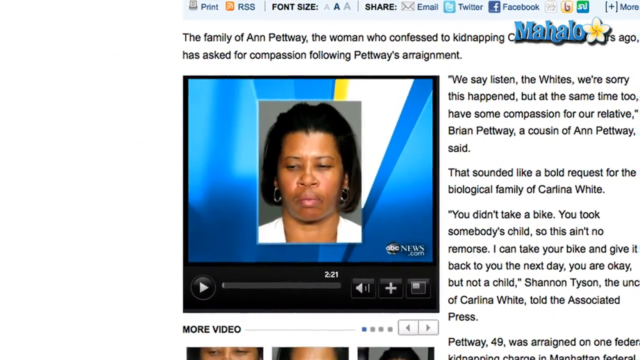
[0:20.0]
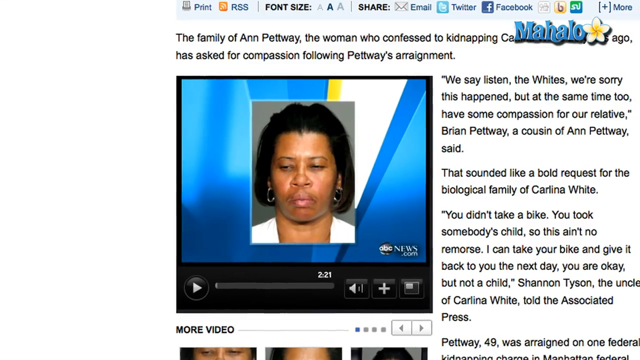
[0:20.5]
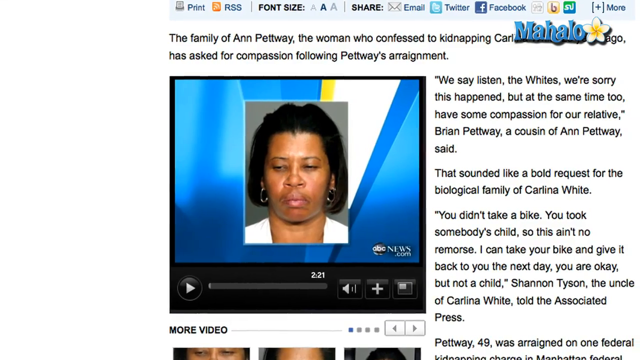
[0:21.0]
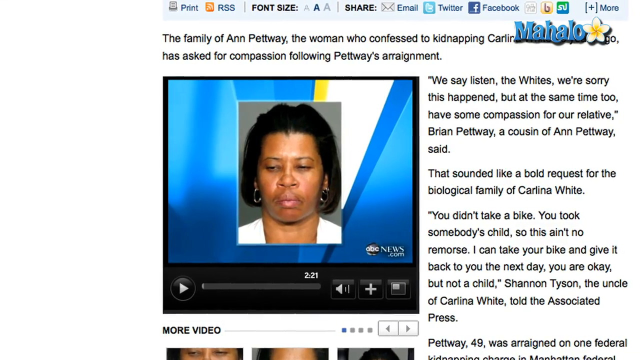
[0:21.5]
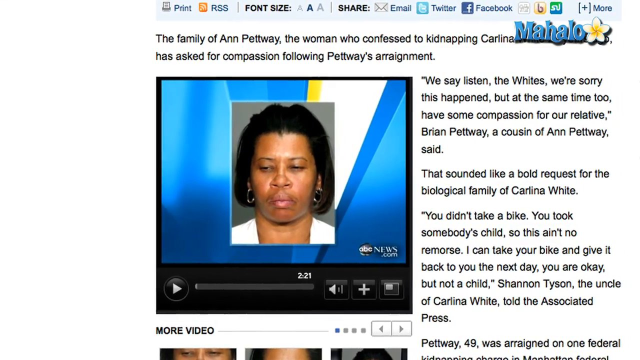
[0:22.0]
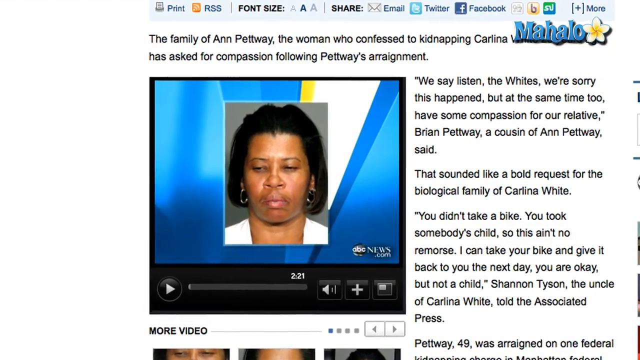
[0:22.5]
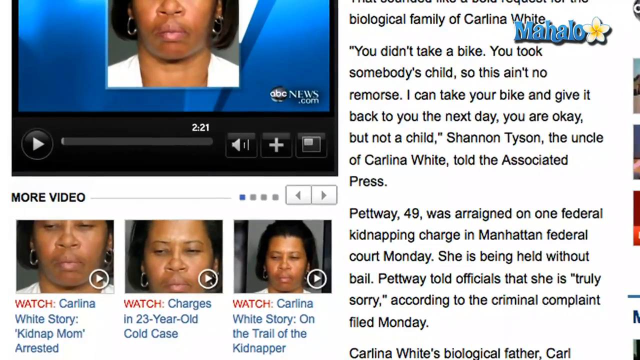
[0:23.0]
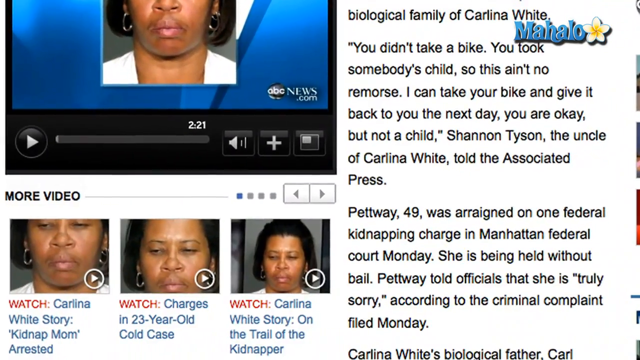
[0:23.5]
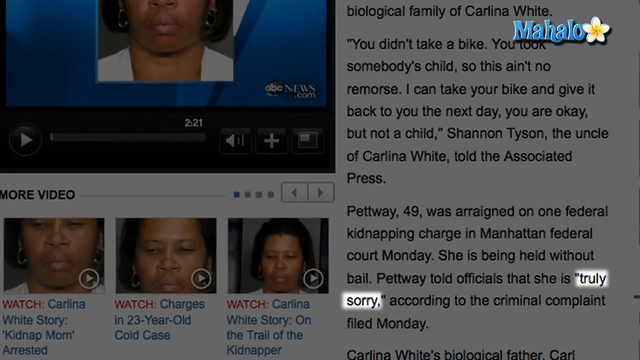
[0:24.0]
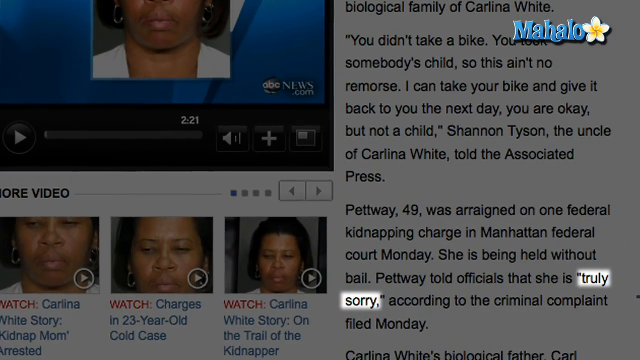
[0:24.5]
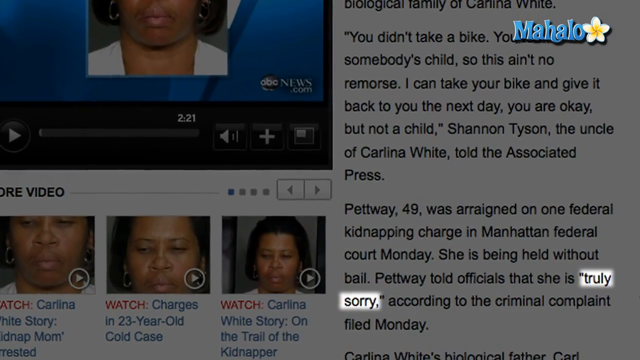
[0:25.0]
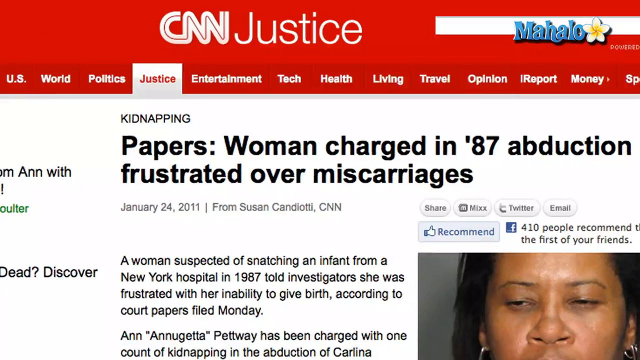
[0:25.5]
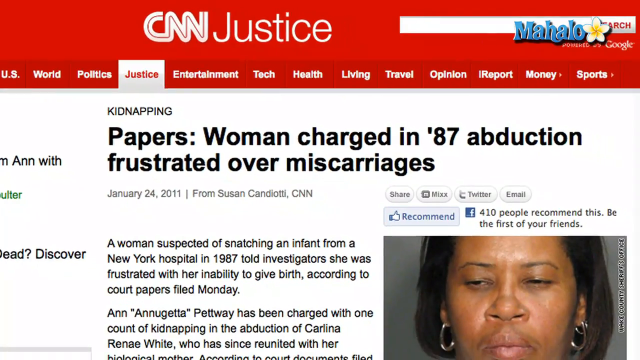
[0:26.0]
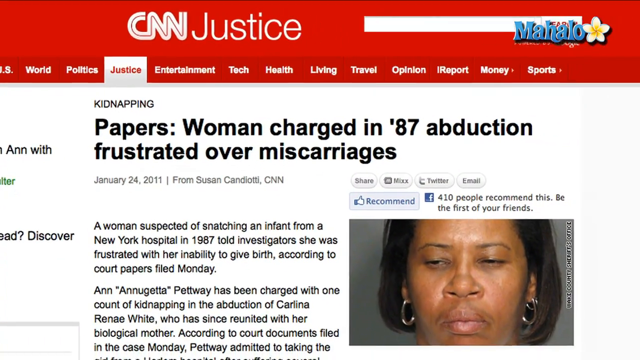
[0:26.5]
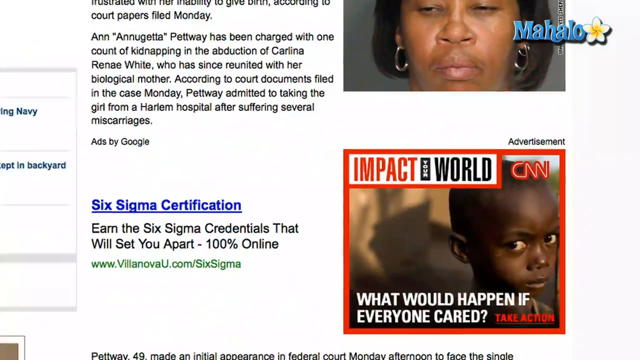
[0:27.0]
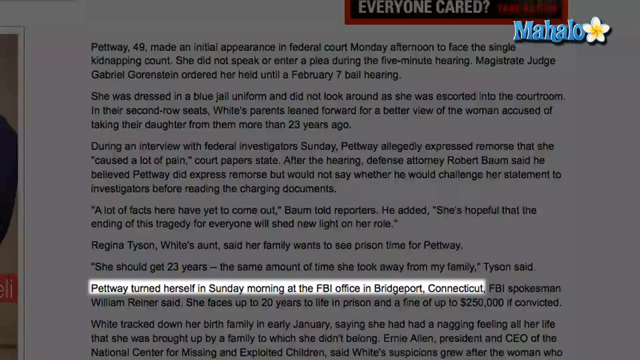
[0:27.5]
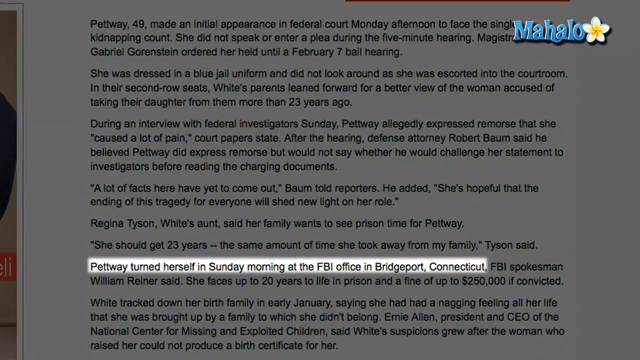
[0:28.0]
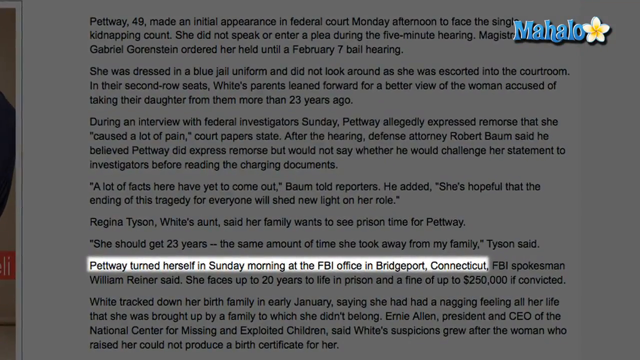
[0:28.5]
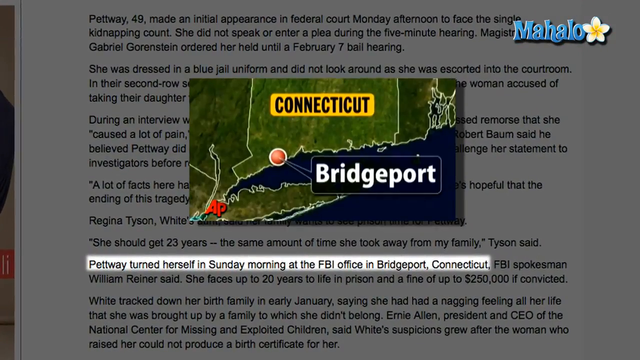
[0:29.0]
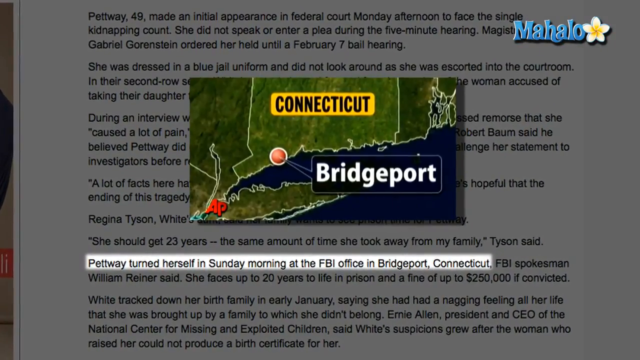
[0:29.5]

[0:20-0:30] Screenshots of what look to be website articles follow. The first website has a white background with black text and contains a screenshot of a video showing the same woman seen earlier. The text begins "The family of Anne Pettway, the woman who confessed to kidnapping". The view moves lower on the article to text saying that Pettway claims she was truly sorry. The scene shifts to a screenshot of a CNN Justice web page with an article titled "Papers: Women Charged in '87 Abduction Frustrated Over Miscarriages", which also has the same photograph of the woman.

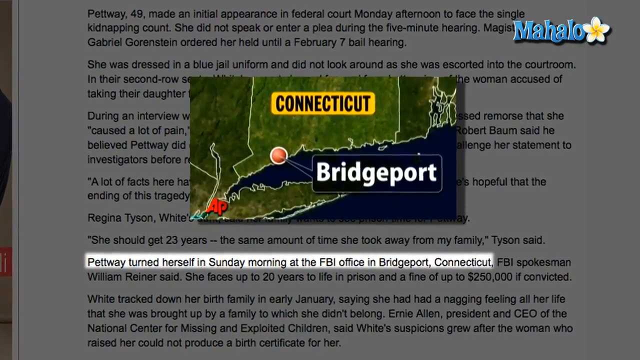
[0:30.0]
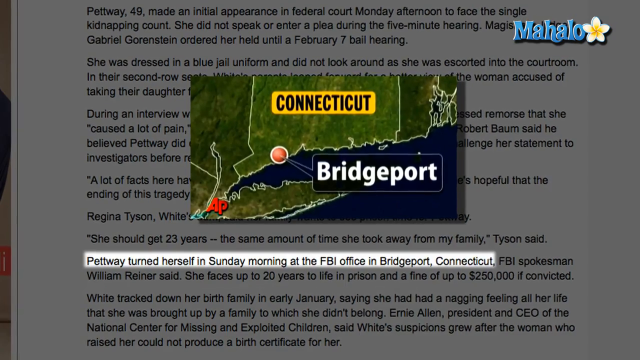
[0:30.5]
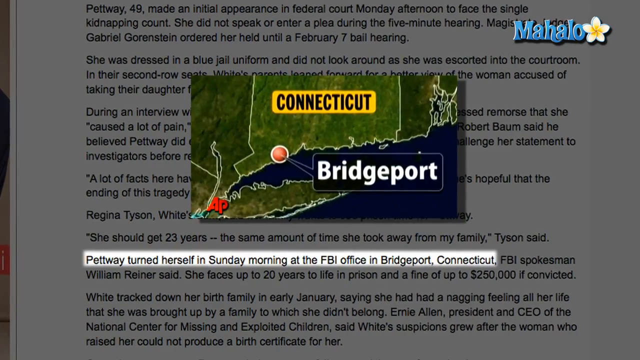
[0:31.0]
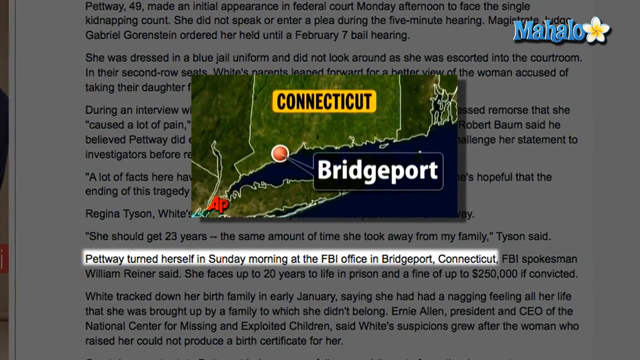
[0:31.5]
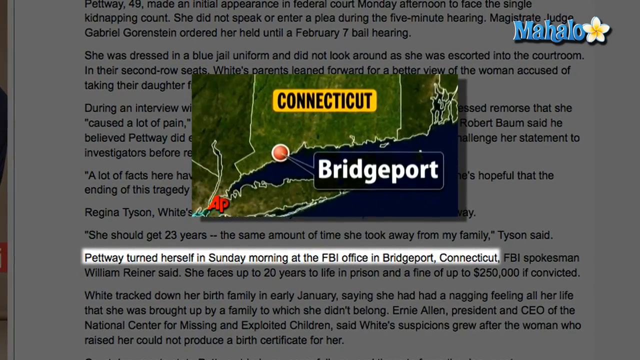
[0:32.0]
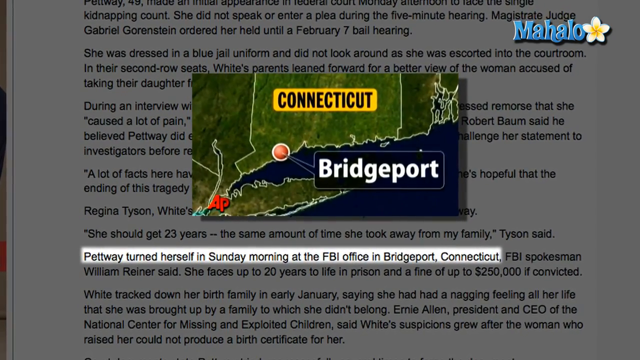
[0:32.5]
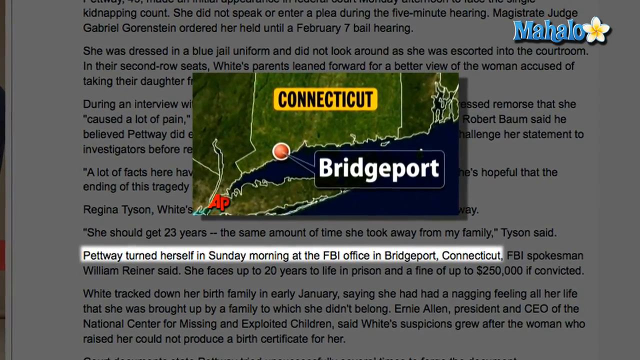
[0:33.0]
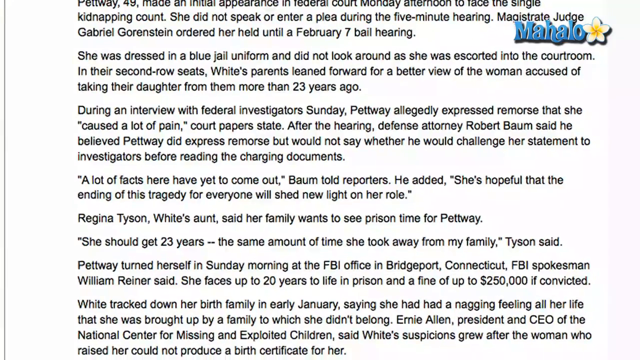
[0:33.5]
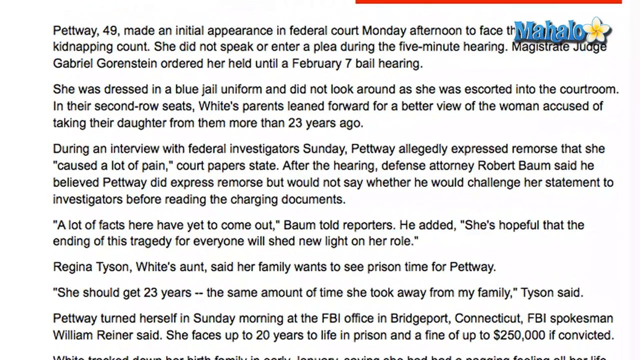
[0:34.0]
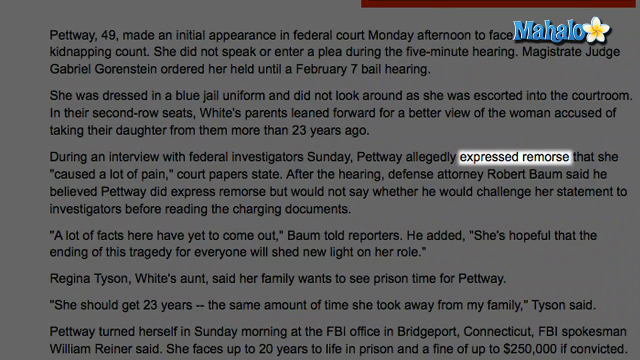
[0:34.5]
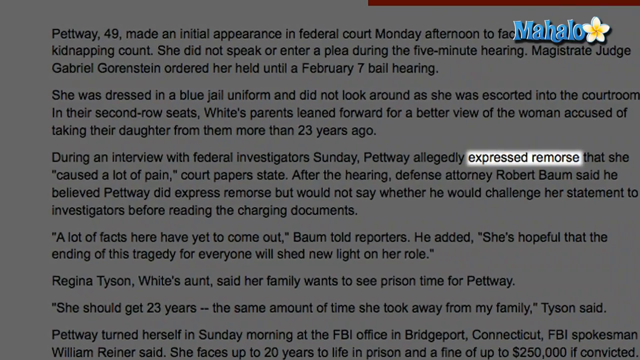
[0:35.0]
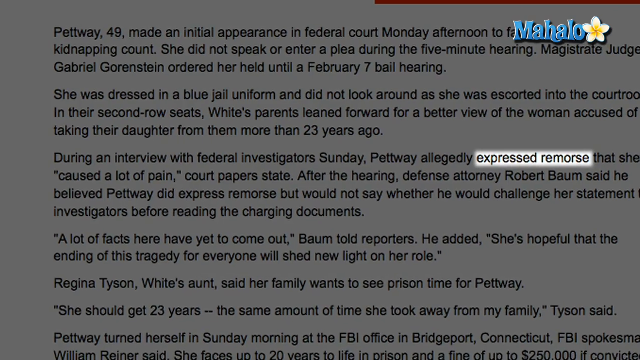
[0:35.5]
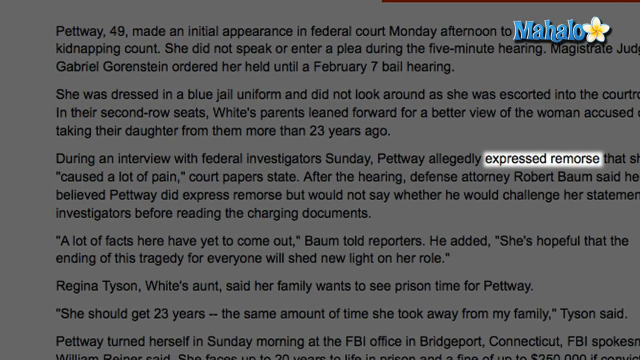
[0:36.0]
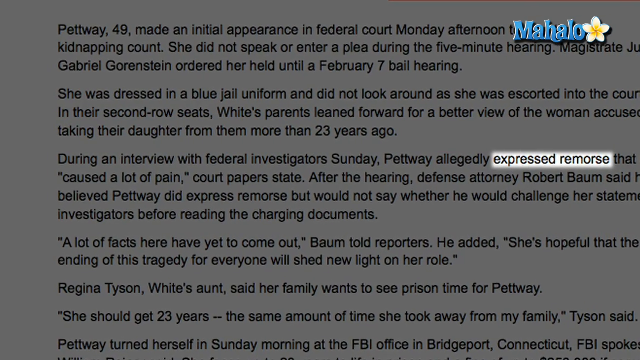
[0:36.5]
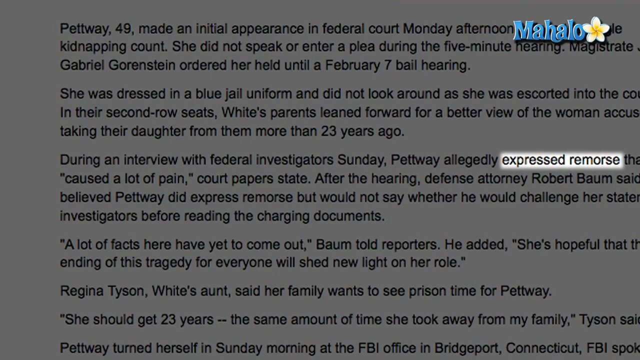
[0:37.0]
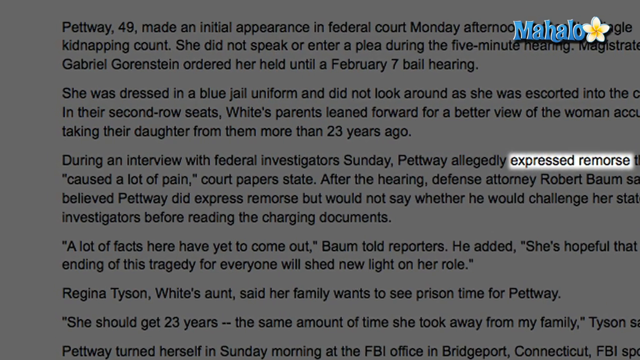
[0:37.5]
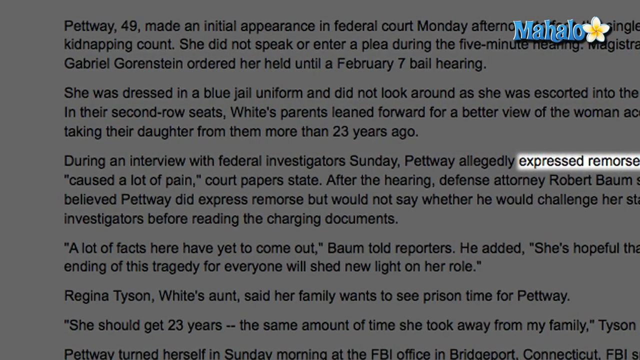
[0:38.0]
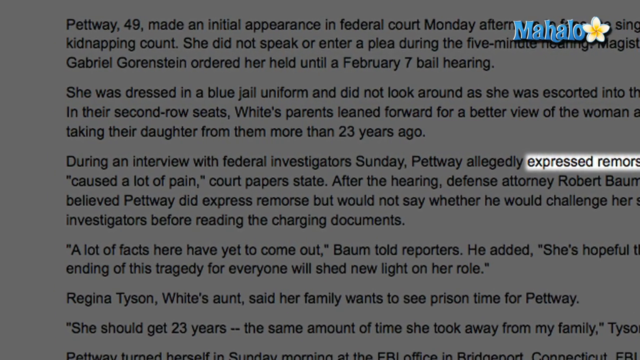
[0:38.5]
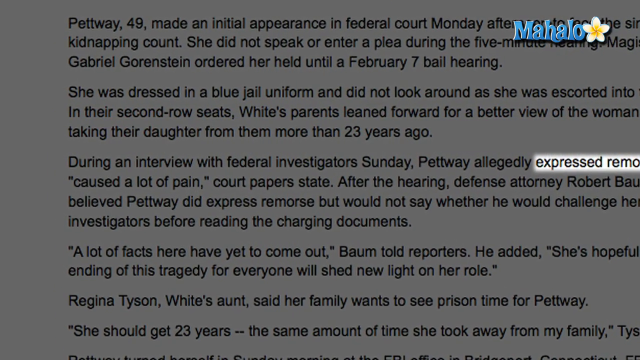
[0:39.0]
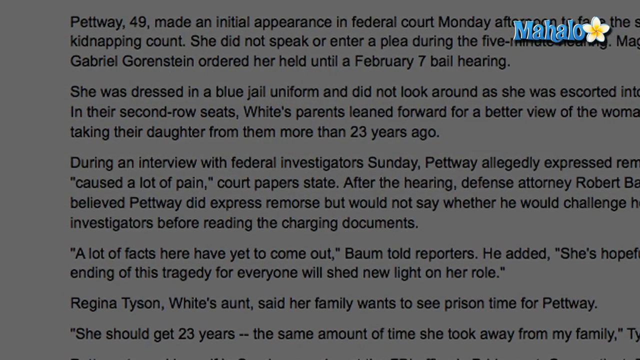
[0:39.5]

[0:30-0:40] Screenshots of website articles continue. The first has a white background and black text, with a map above the text showing the outline of the state of Connecticut. A red circle marks the location of one city, and the label pointing to it reads "Bridgeport". One portion of the text is highlighted, brighter while the rest of the text is shaded back; it reads "Pettway turned herself in Sunday morning at the FBI office in Bridgeport, Connecticut." The scene shifts to another portion of the article, where again most of the text is shaded and one area is highlighted with the text "expressed remorse".